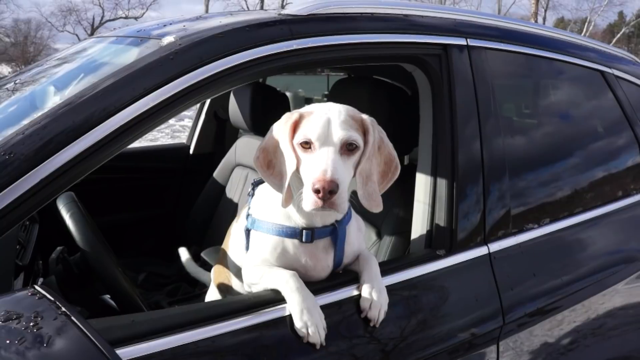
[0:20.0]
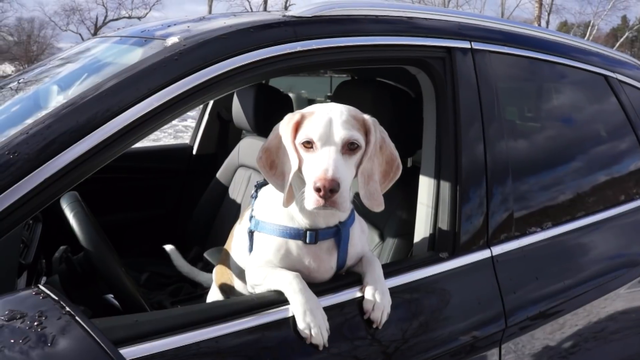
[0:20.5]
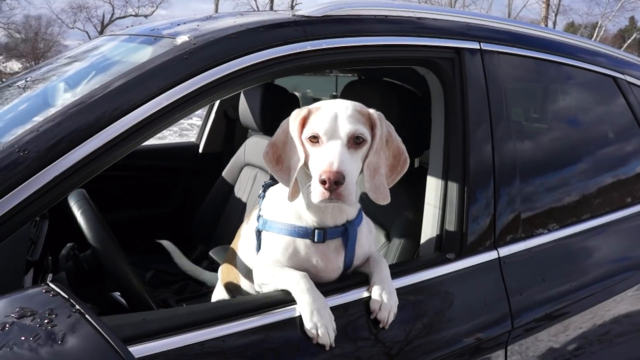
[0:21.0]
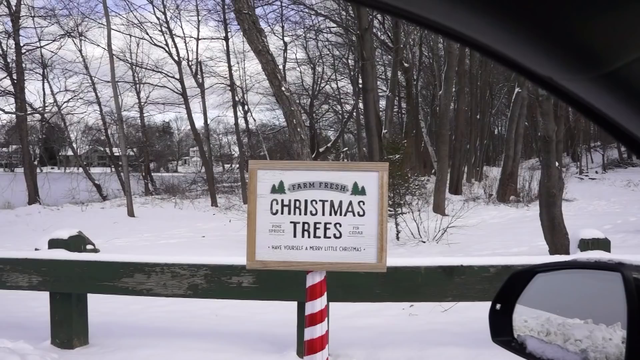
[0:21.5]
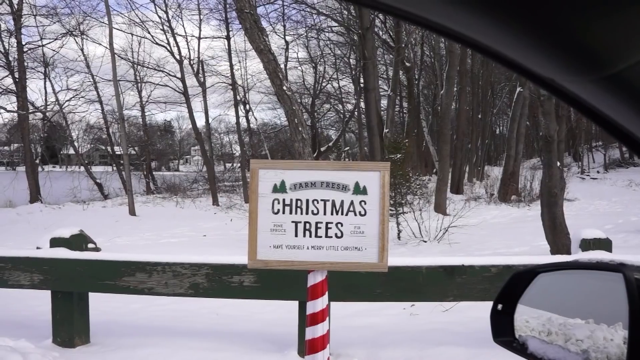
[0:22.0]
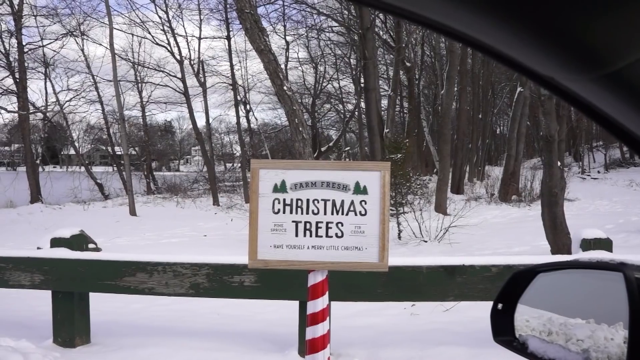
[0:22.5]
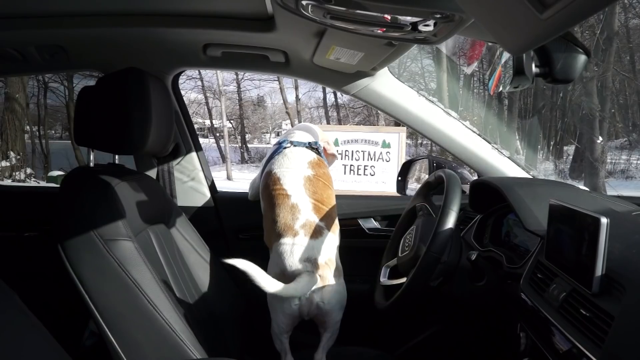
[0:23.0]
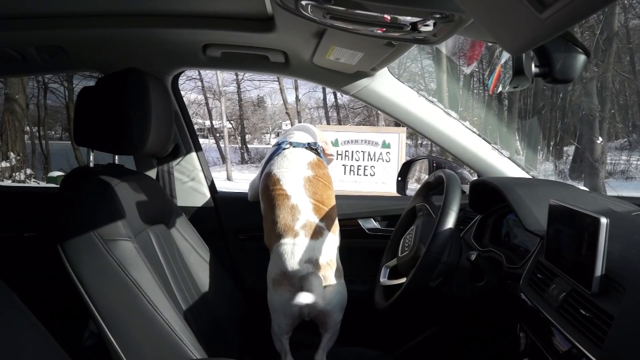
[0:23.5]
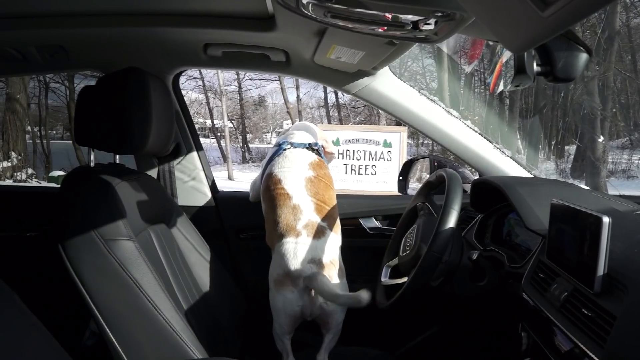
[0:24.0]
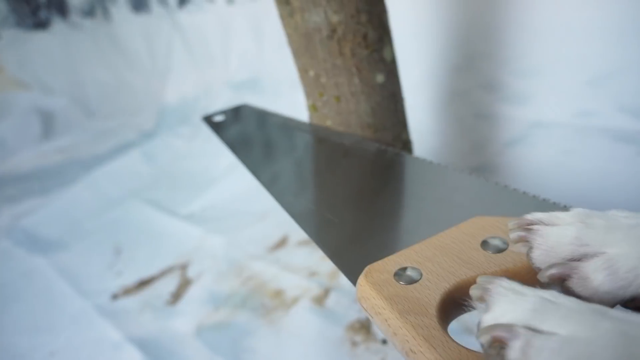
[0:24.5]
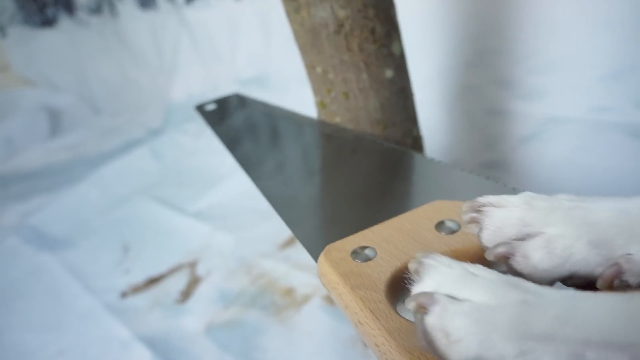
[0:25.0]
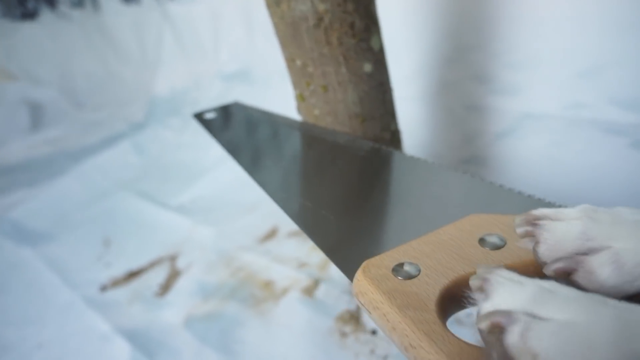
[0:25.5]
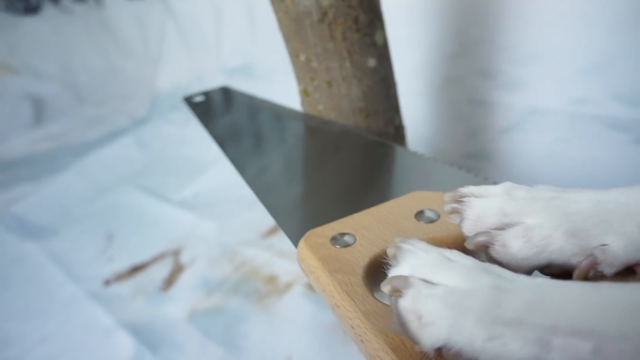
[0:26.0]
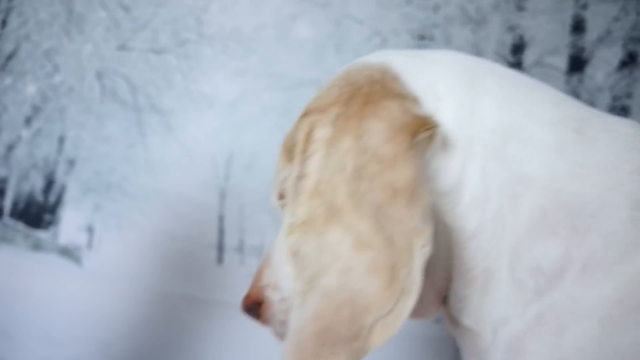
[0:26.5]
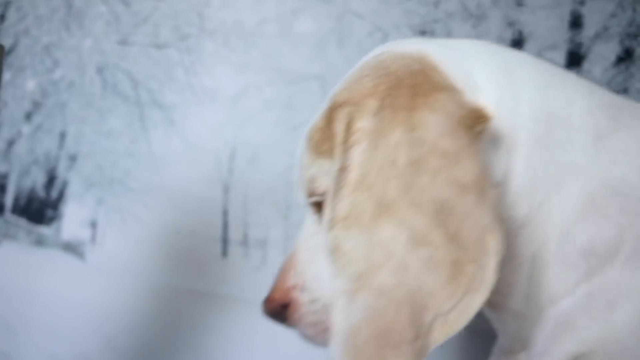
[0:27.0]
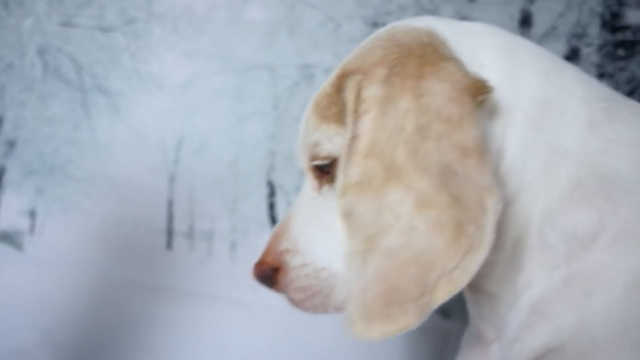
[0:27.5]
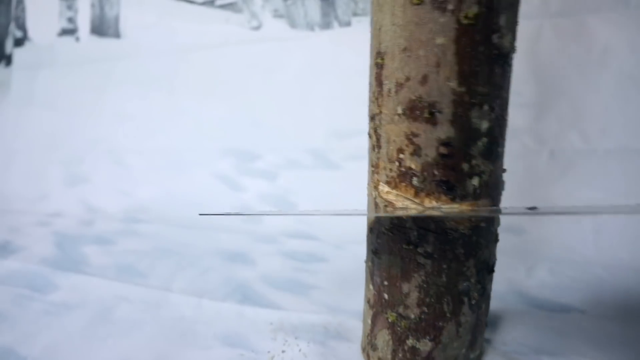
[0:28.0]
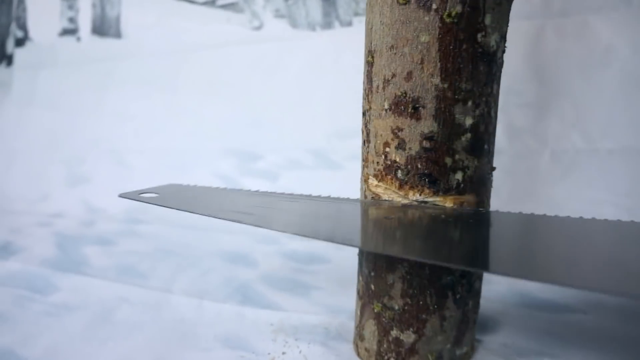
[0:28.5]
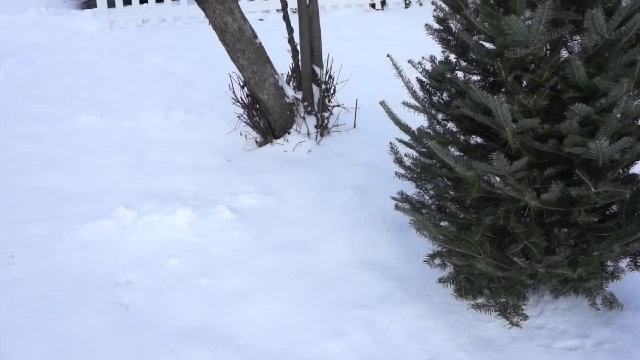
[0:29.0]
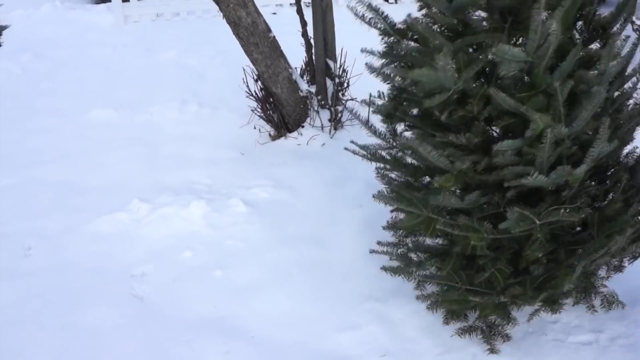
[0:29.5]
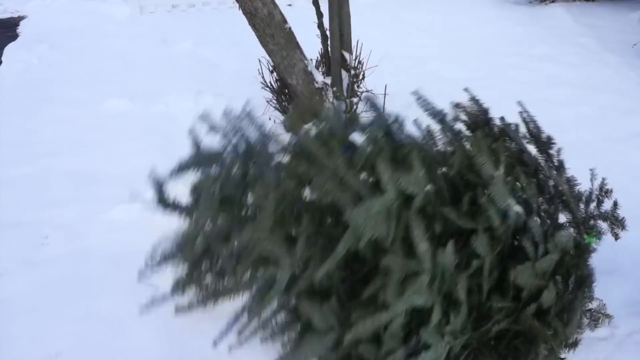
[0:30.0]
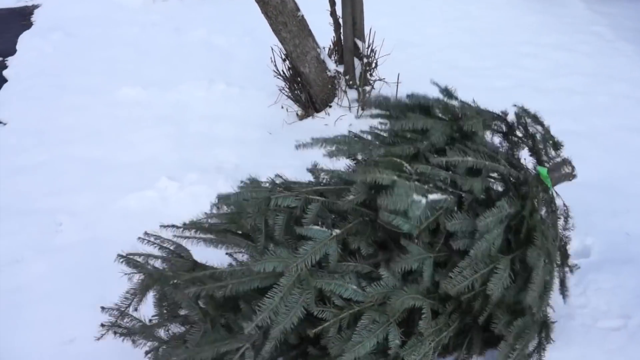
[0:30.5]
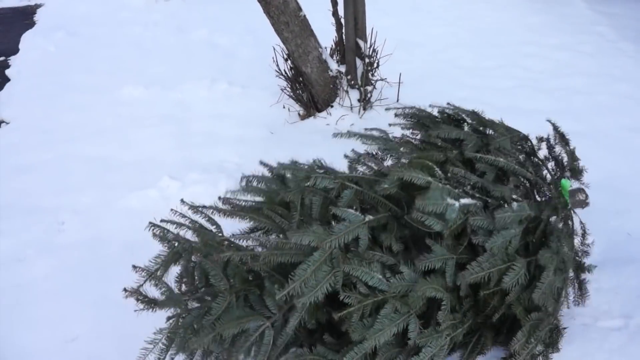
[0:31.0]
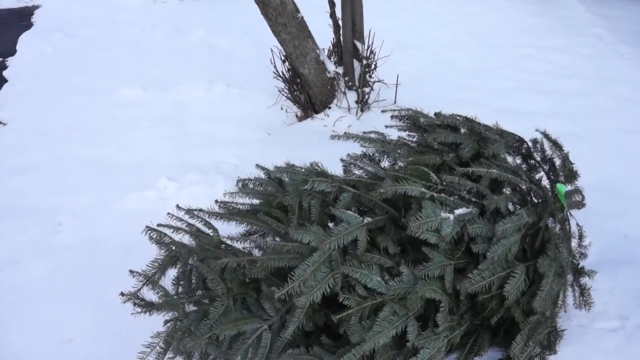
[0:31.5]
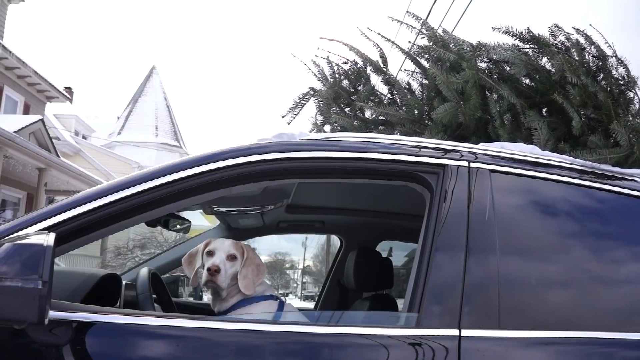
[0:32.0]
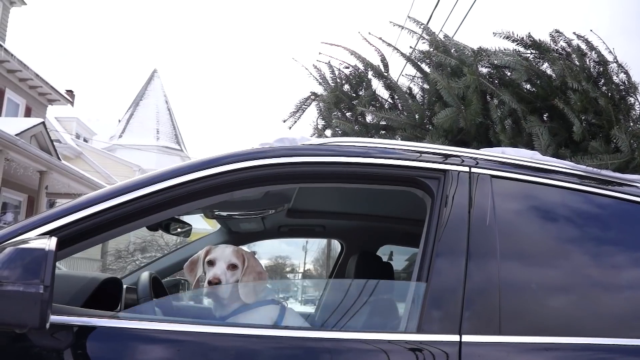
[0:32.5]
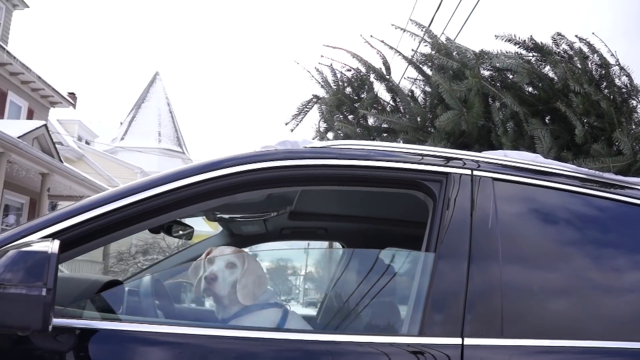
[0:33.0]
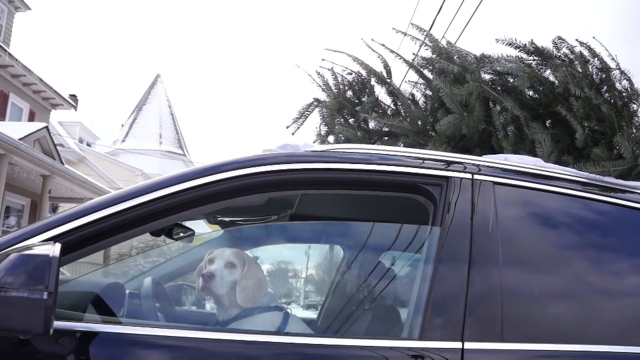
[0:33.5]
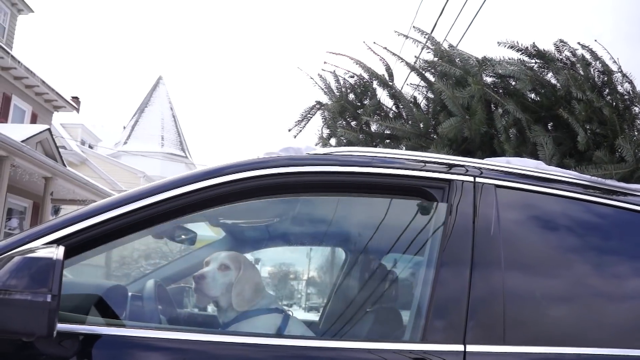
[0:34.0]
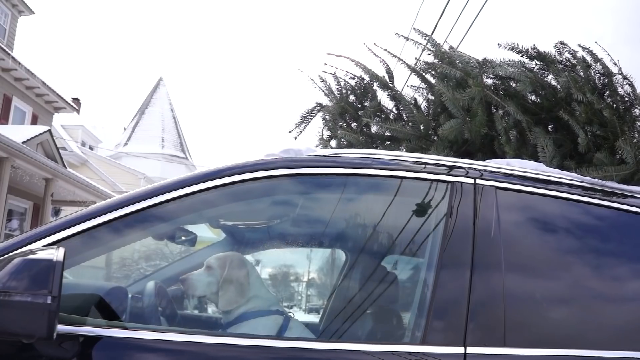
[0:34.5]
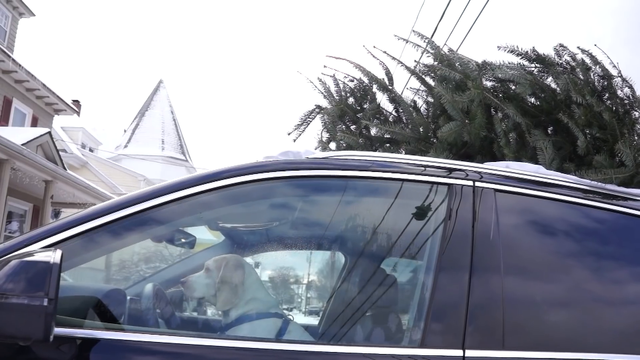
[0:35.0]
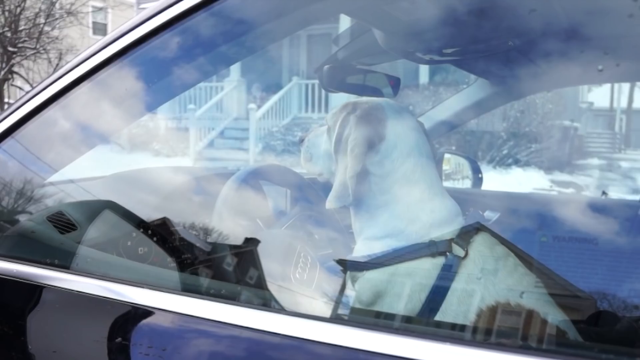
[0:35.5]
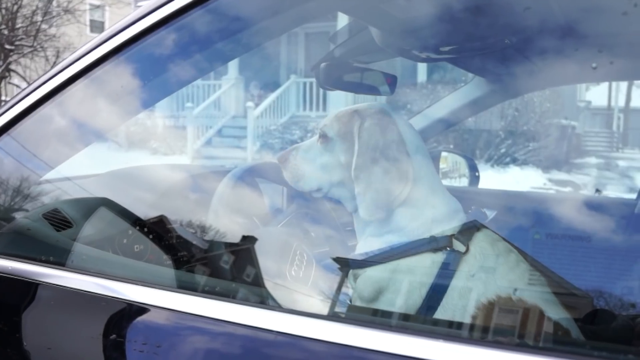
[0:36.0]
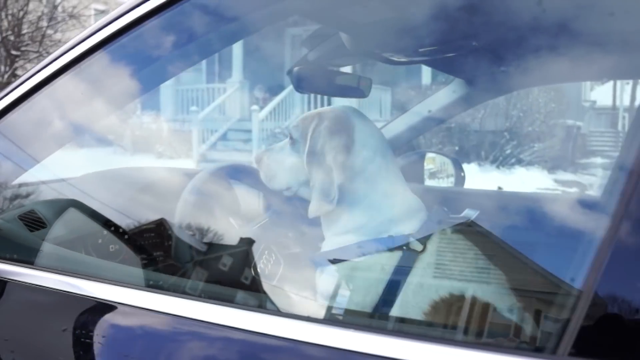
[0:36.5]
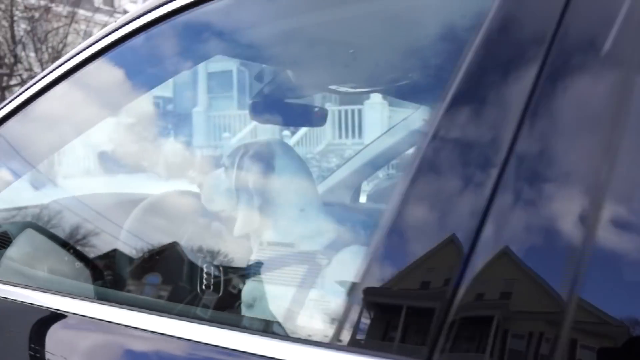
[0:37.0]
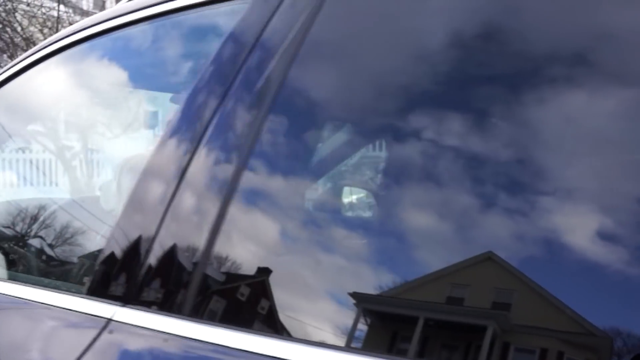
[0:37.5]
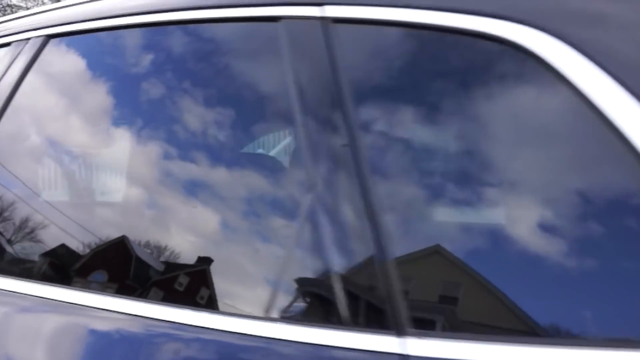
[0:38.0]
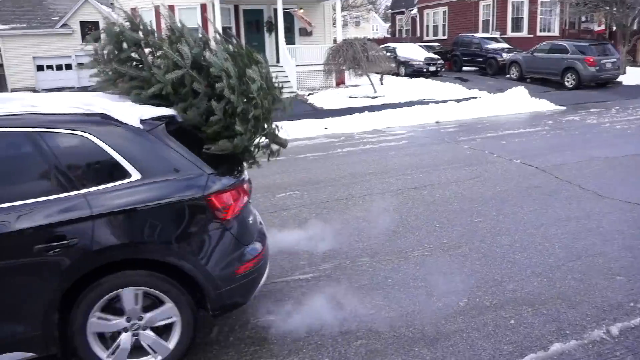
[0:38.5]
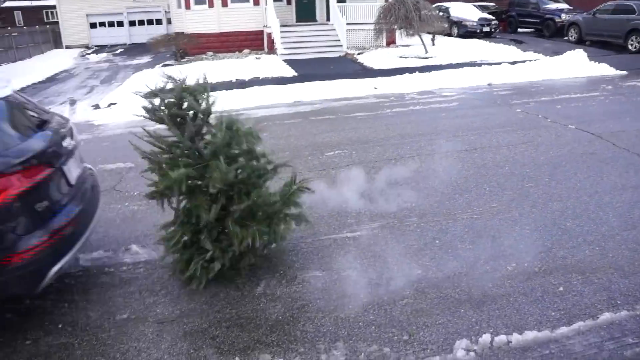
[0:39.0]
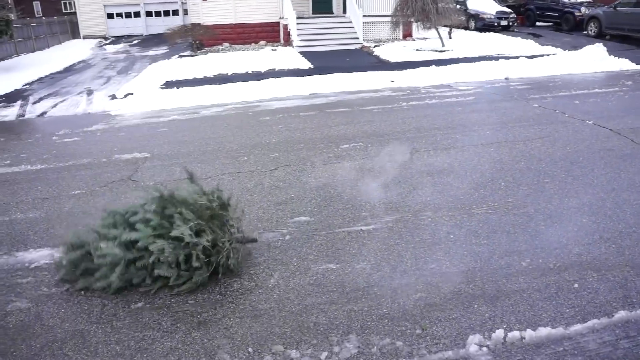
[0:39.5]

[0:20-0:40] The dog finishes driving and arrives at a park full of Christmas trees. It stops the car, hangs out of the door wagging its tail, comes outside and goes into the park. In the snow, the dog holds a saw and saws through a tree trunk with both paws. The Christmas tree falls and is loaded onto the vehicle, and the dog drives away, but the tree is not tied down, so it falls in the back and drops off the vehicle.